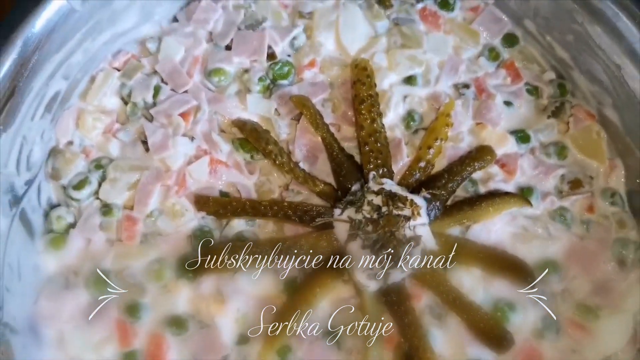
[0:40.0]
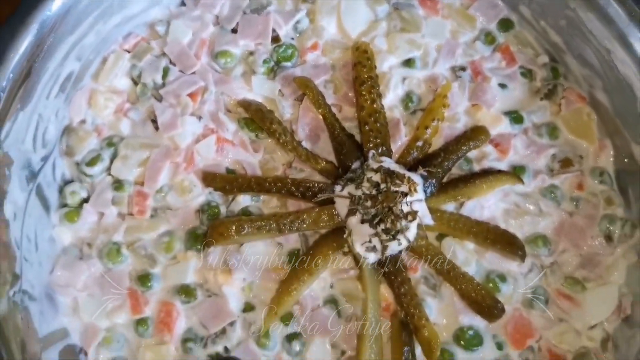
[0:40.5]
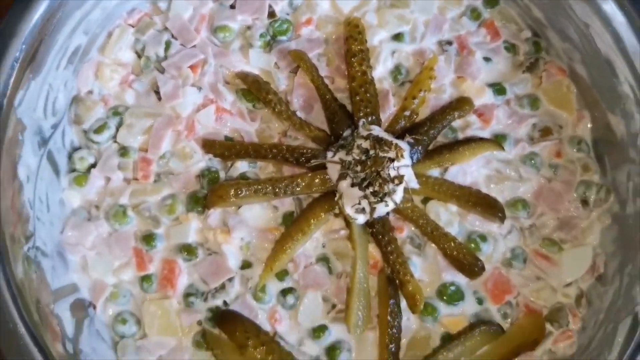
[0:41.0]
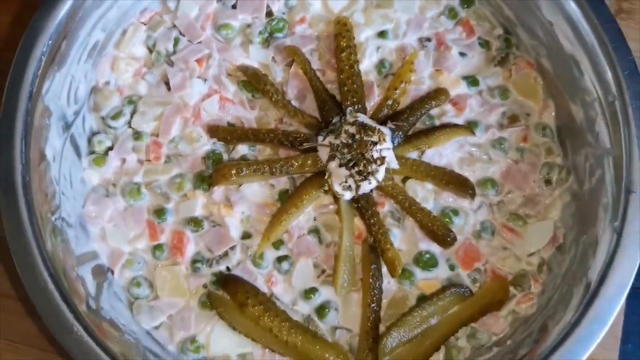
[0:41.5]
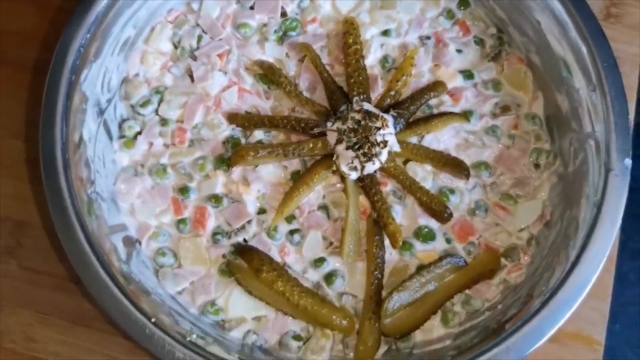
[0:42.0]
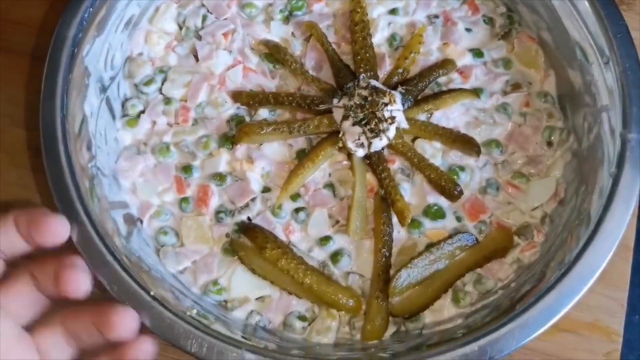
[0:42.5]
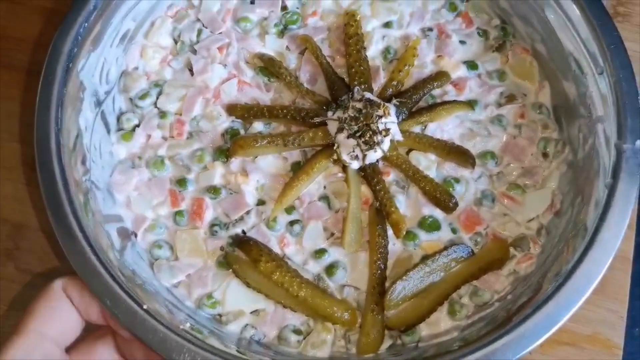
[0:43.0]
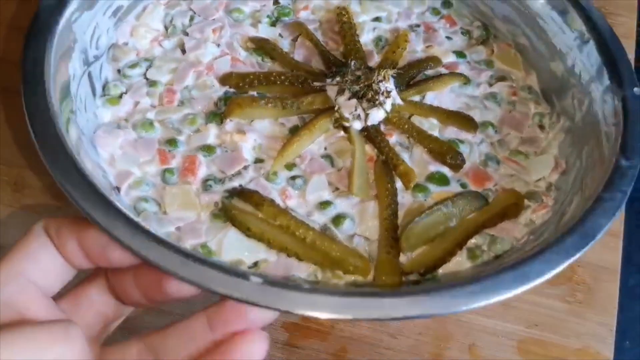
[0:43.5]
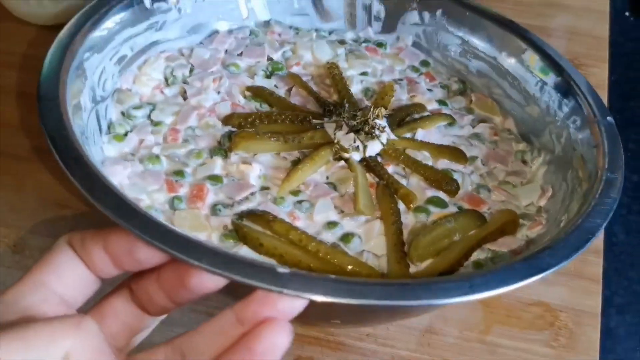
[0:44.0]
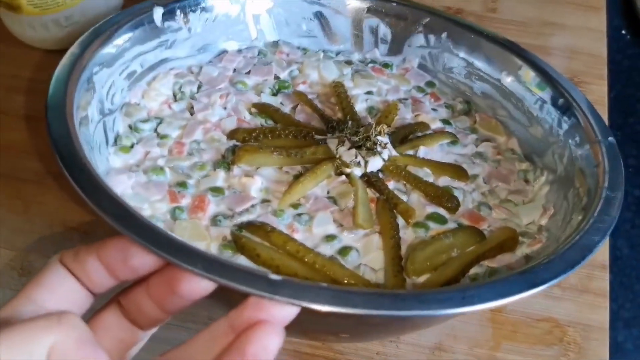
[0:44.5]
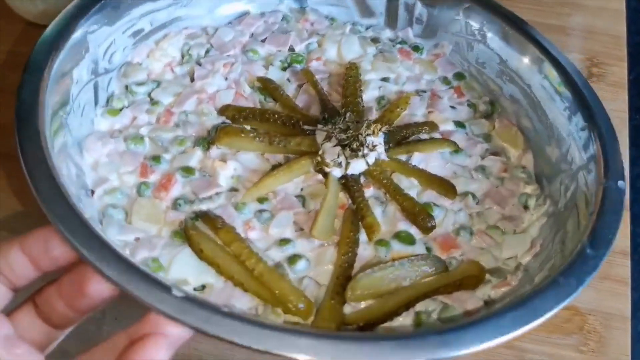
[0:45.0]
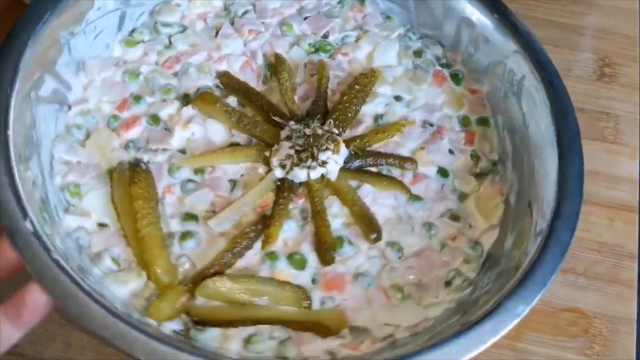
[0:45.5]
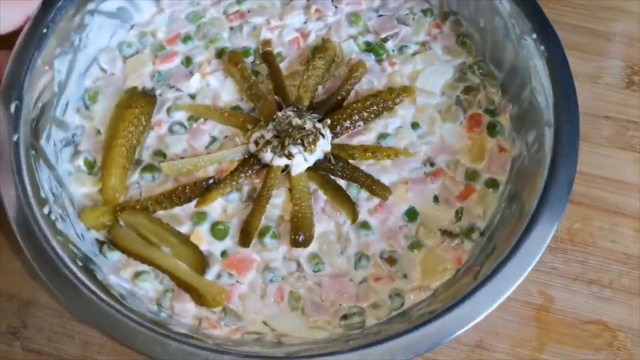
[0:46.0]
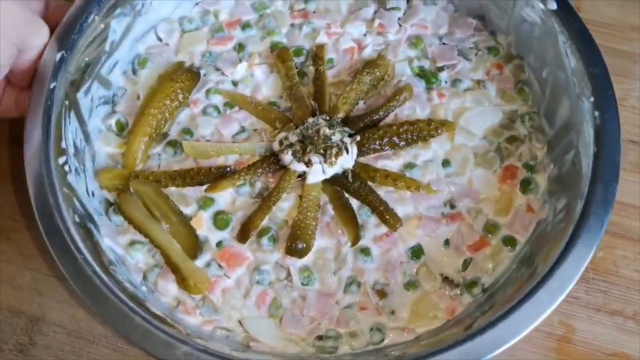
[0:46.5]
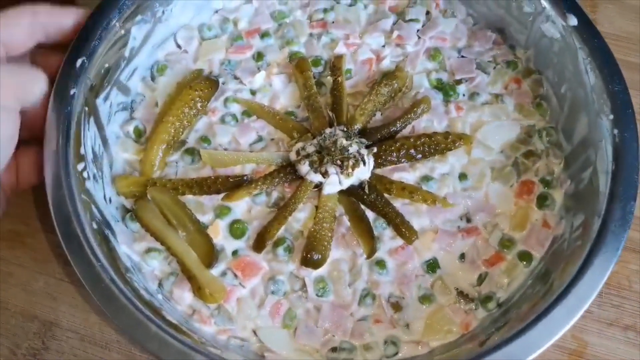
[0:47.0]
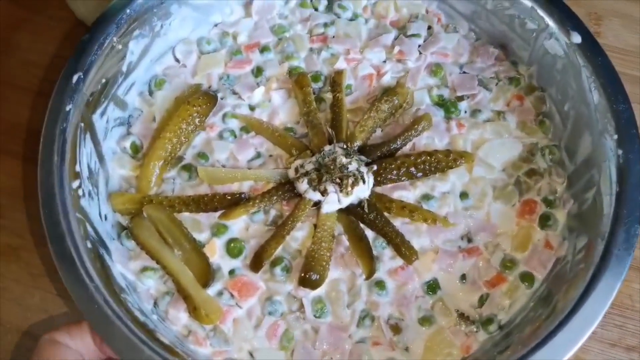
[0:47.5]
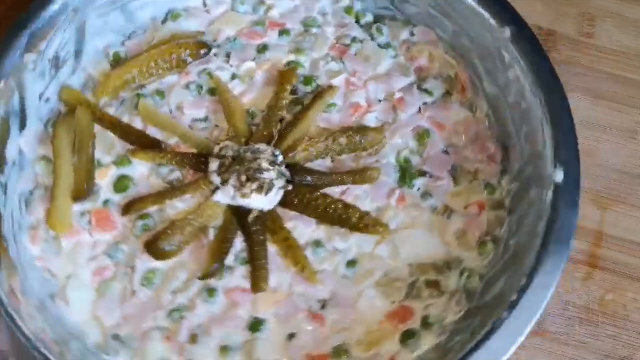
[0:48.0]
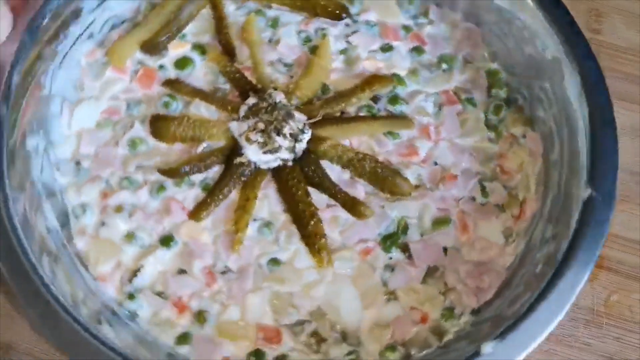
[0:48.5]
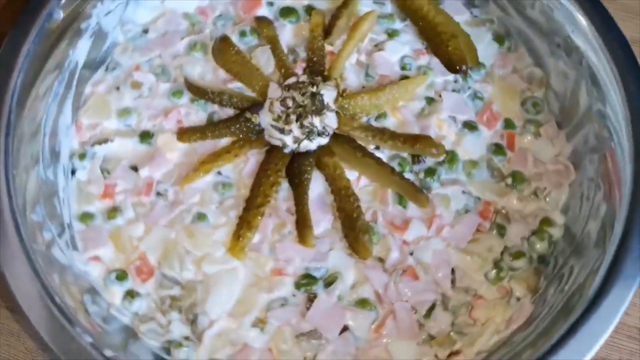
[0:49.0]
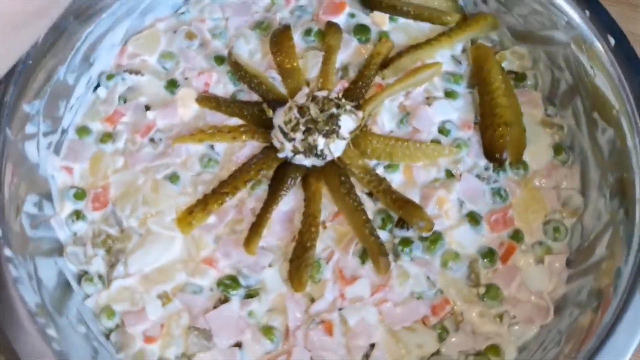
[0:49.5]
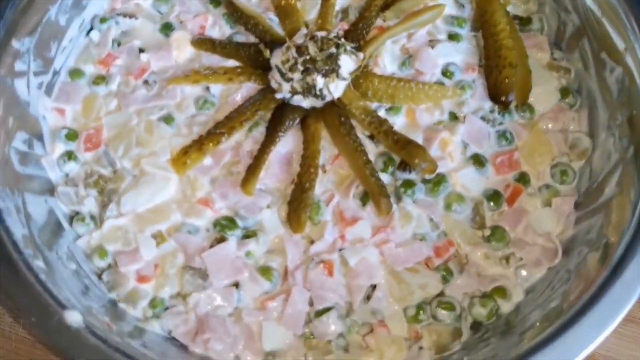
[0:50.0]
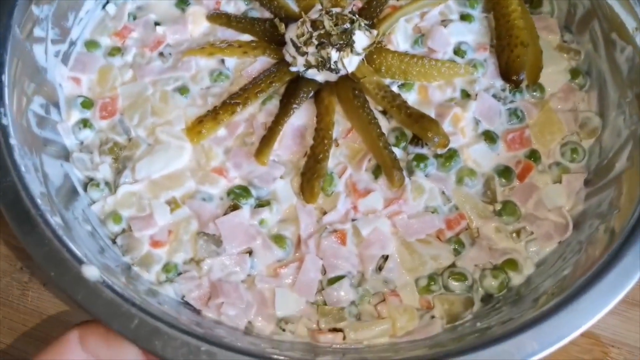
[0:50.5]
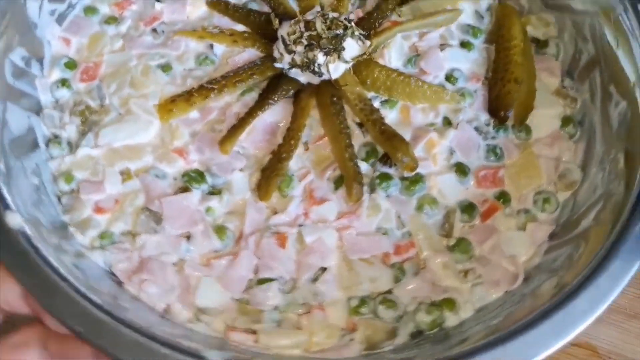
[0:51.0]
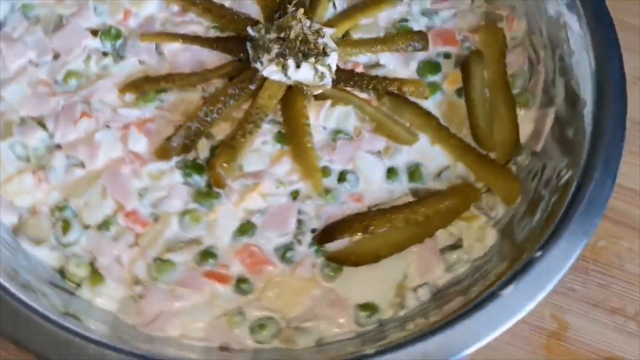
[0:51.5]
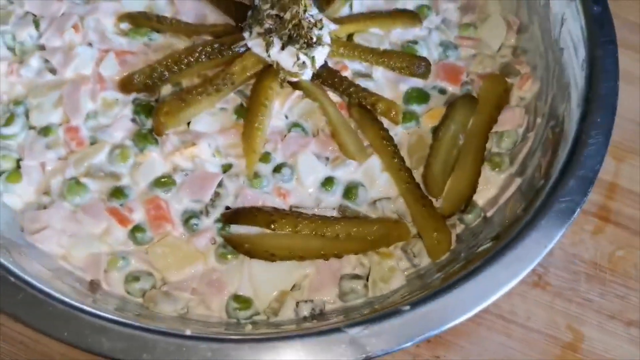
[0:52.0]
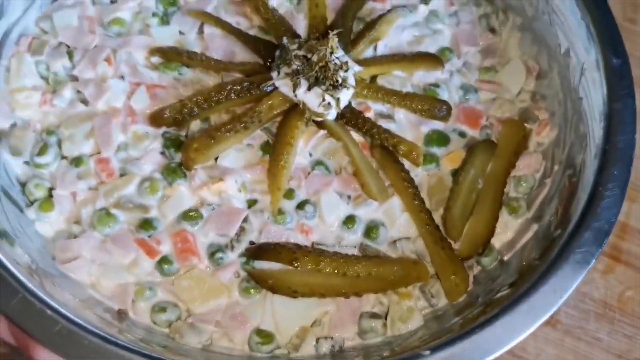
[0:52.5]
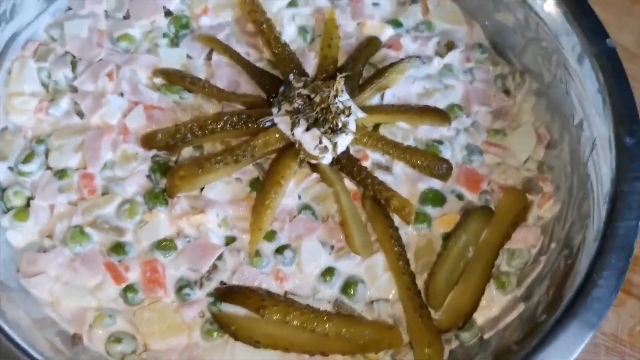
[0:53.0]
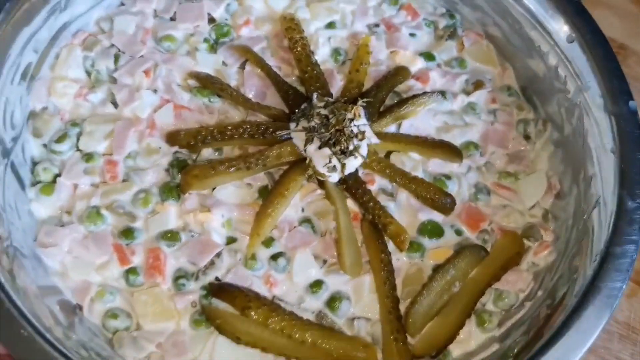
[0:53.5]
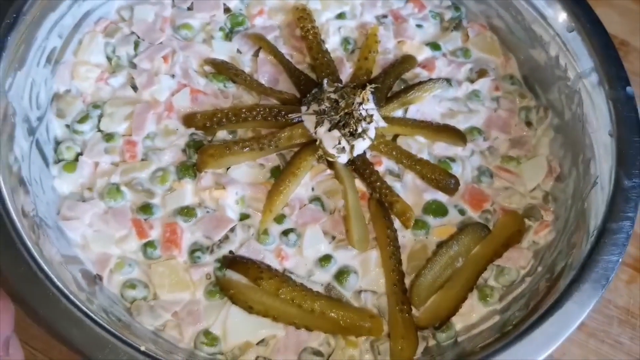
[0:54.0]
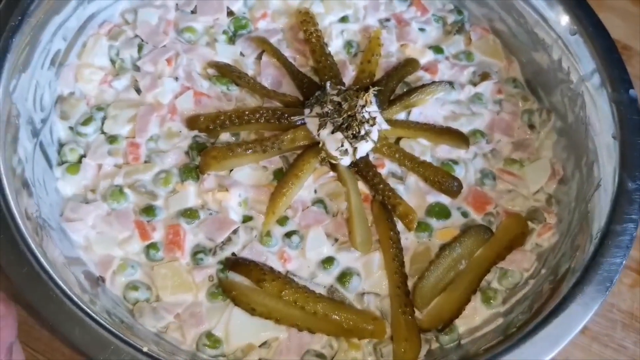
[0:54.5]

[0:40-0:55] The prepared dish is shown in the large metal serving bowl it was prepared in. It is garnished with pickle spears shaped into a flower, with the spears also forming the stem and the leaves. There is a dollop of sour cream in the middle of the pickle spears with a sprinkle of herbs on top, making a flower design of pickles, sour cream and herbs.